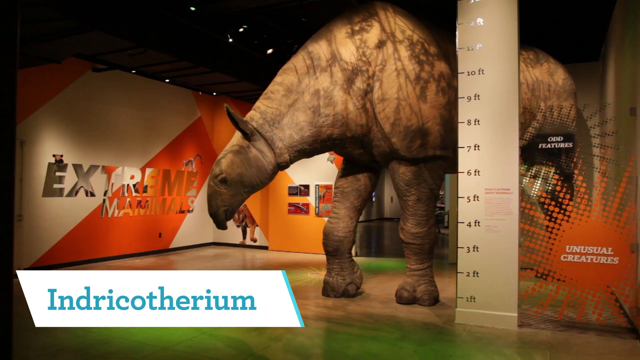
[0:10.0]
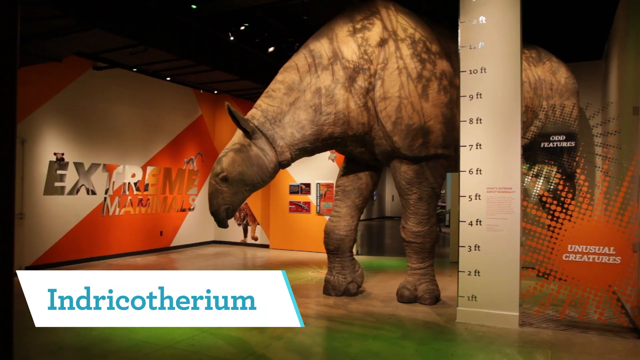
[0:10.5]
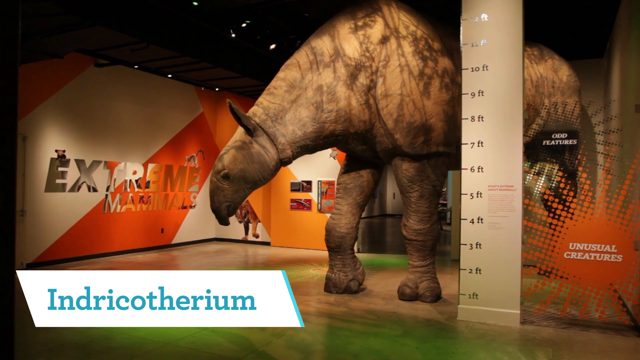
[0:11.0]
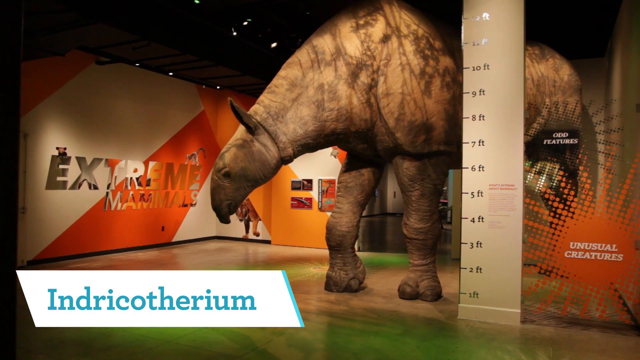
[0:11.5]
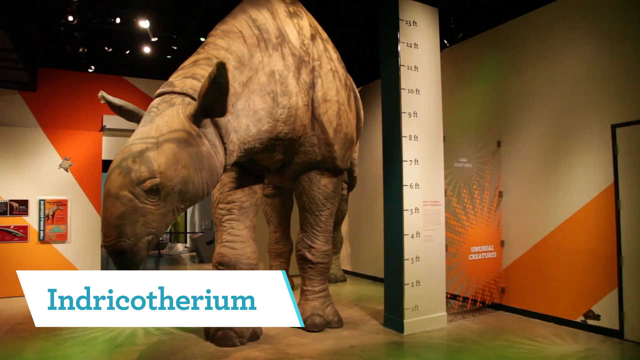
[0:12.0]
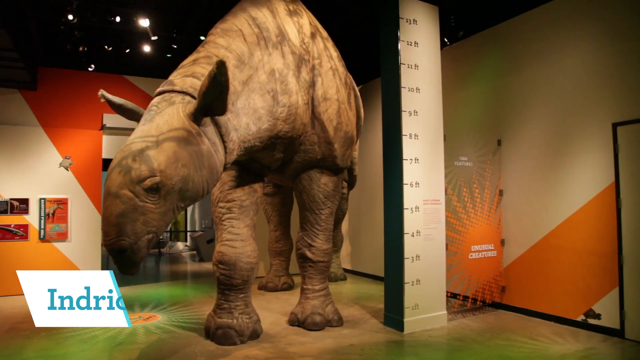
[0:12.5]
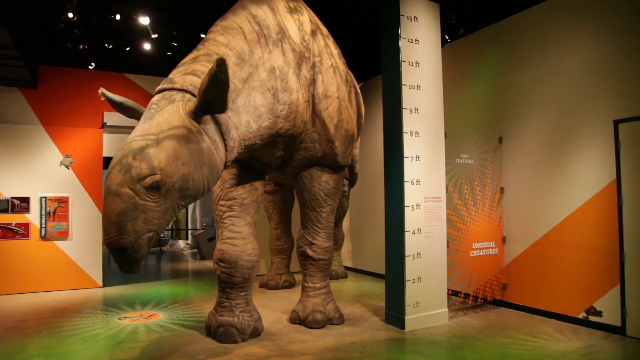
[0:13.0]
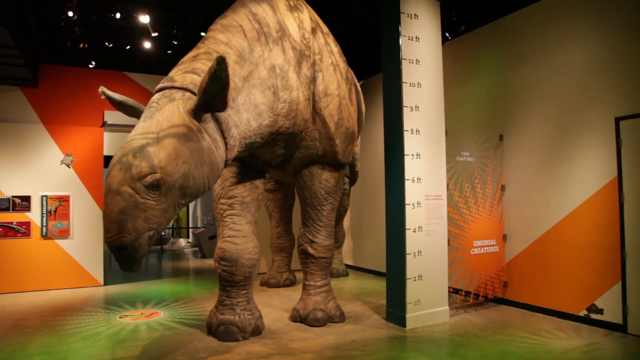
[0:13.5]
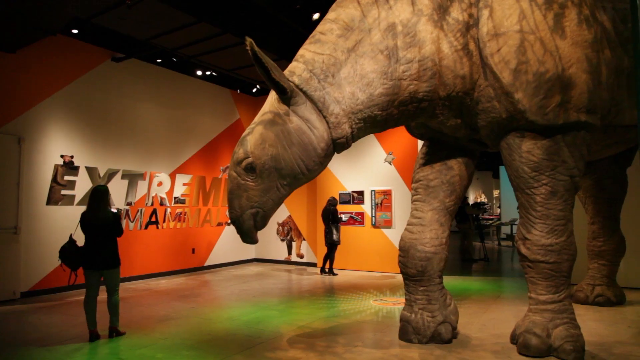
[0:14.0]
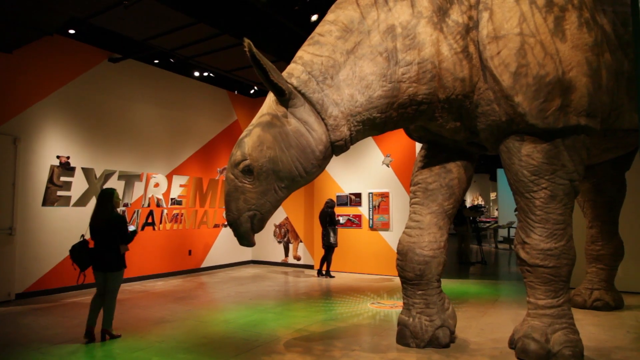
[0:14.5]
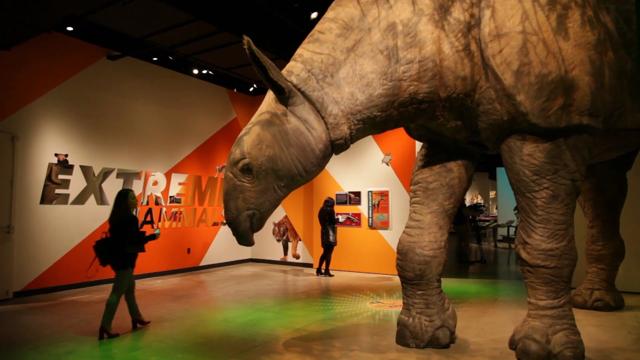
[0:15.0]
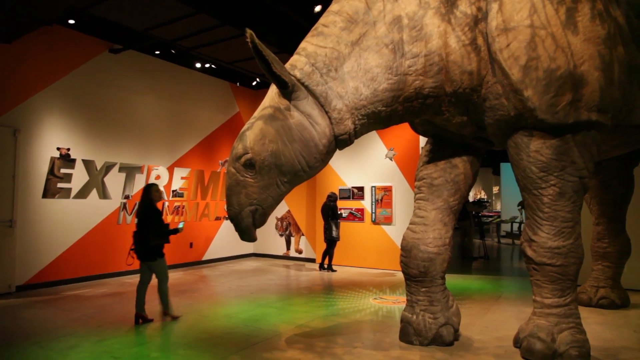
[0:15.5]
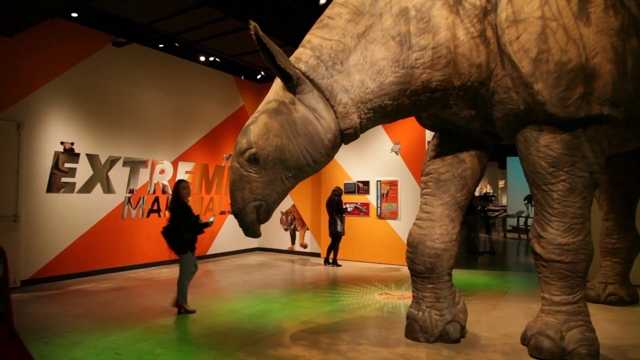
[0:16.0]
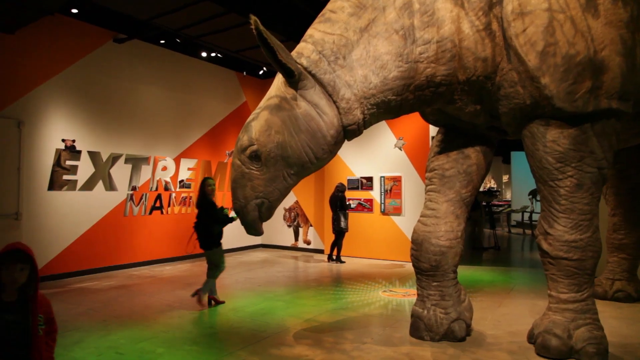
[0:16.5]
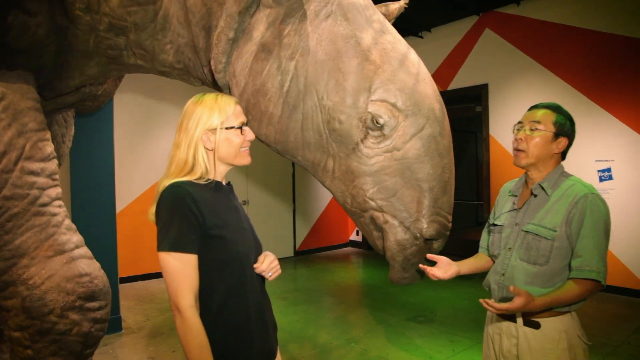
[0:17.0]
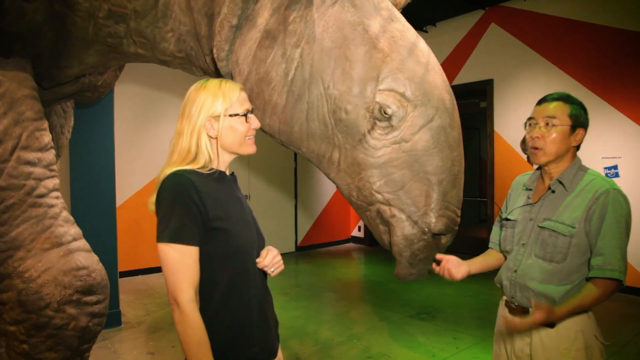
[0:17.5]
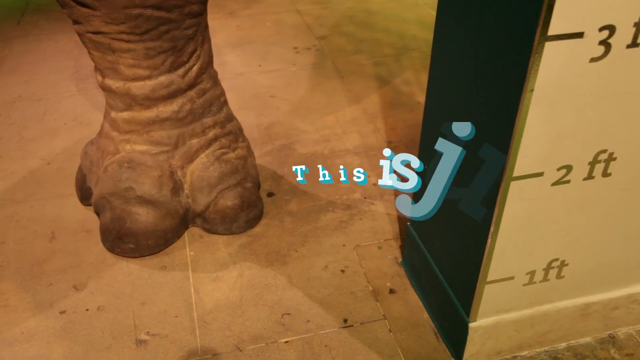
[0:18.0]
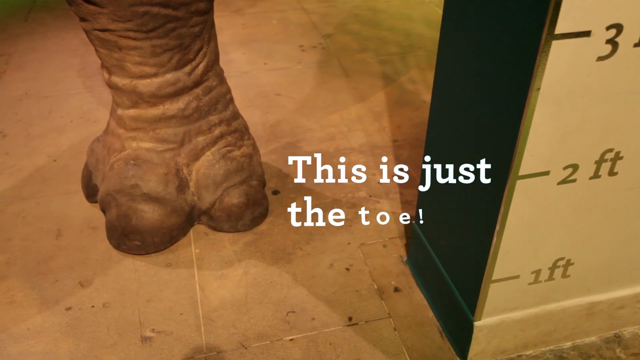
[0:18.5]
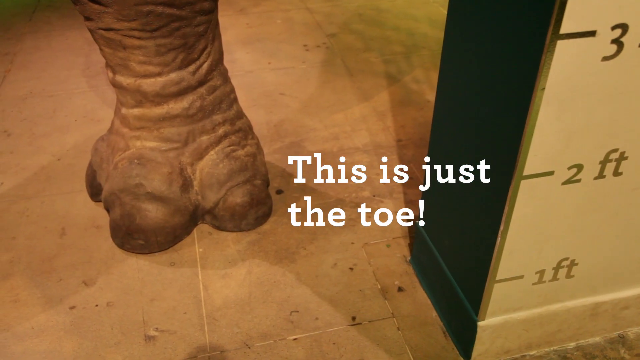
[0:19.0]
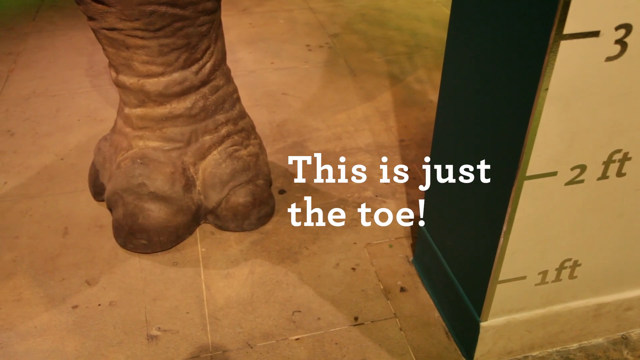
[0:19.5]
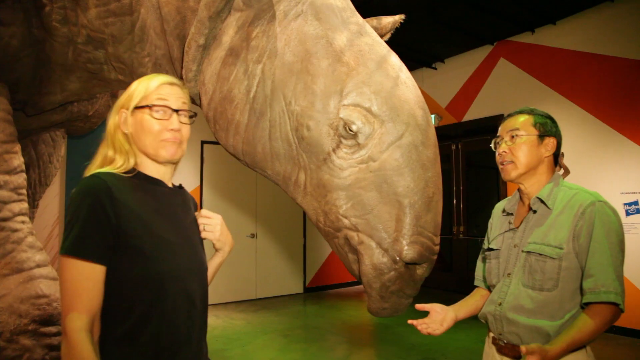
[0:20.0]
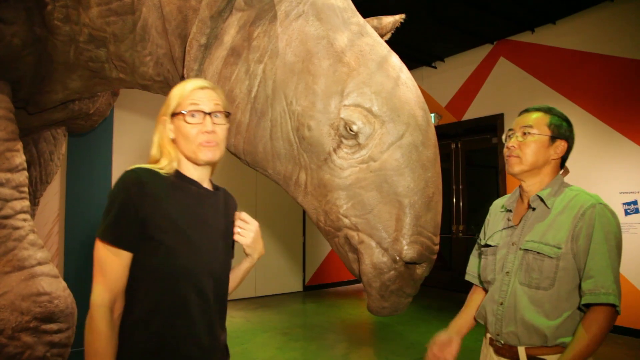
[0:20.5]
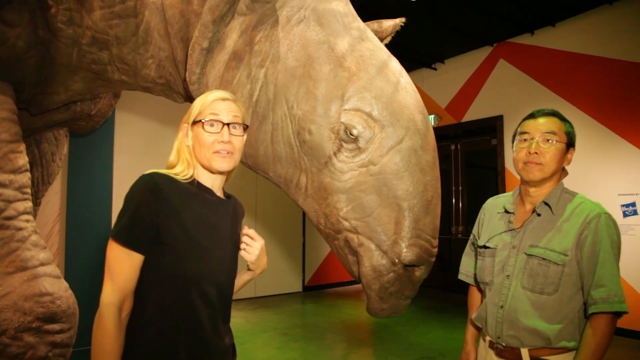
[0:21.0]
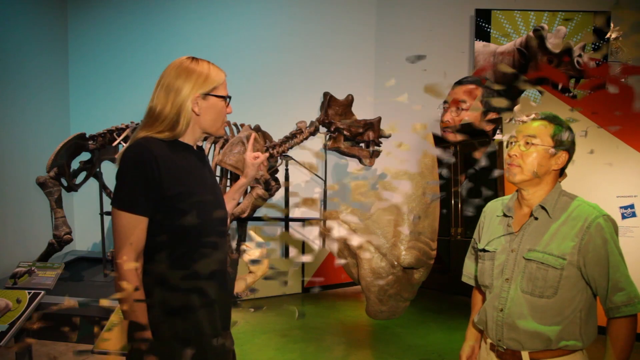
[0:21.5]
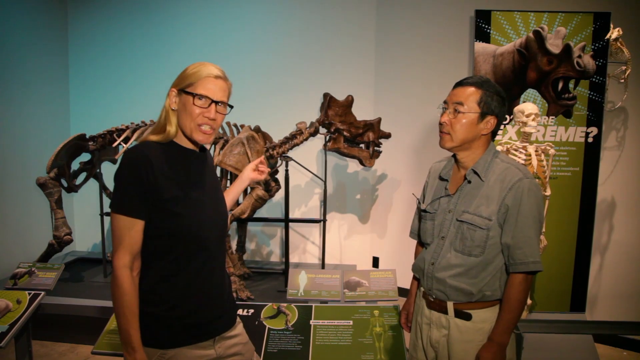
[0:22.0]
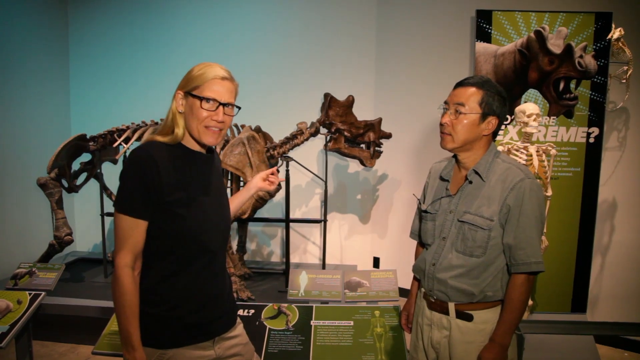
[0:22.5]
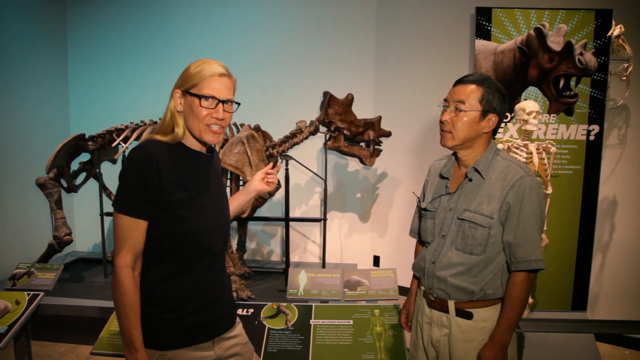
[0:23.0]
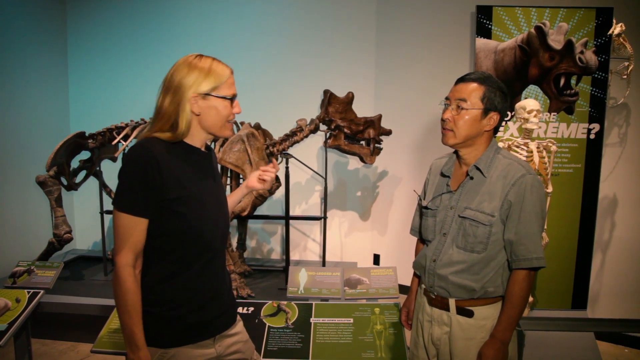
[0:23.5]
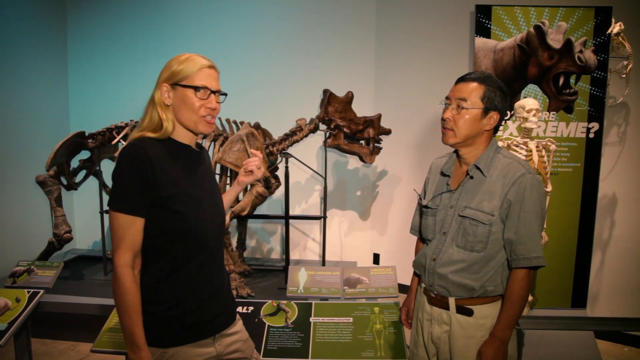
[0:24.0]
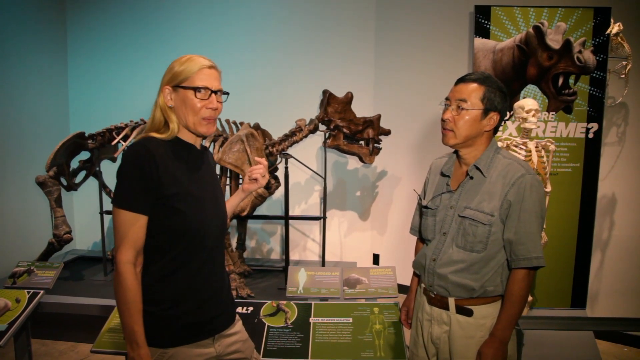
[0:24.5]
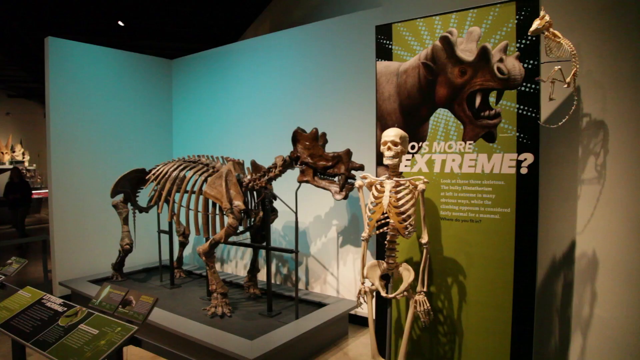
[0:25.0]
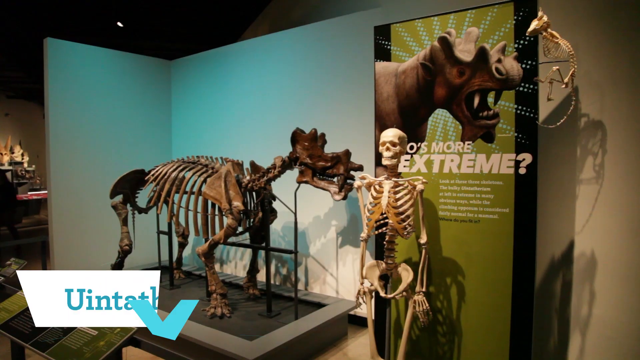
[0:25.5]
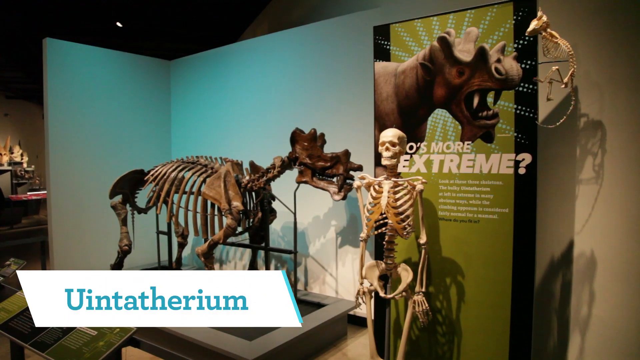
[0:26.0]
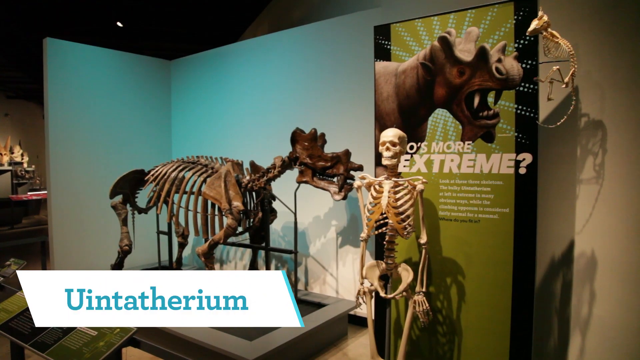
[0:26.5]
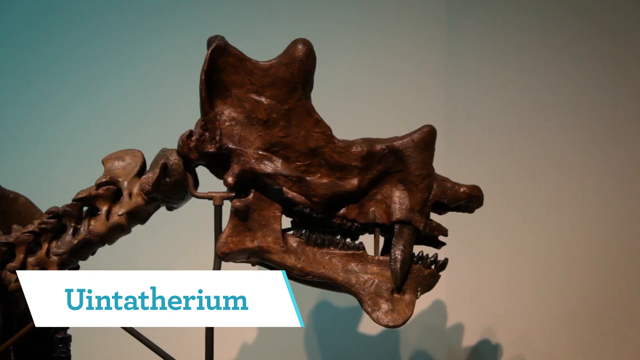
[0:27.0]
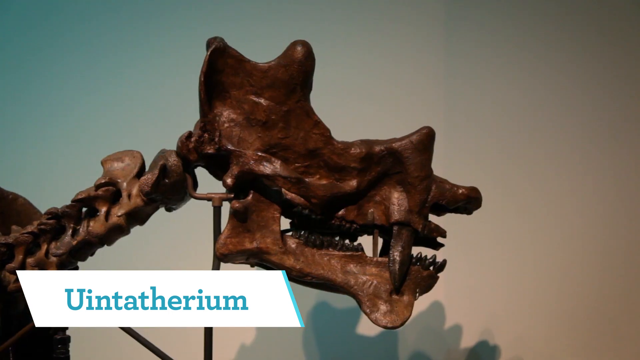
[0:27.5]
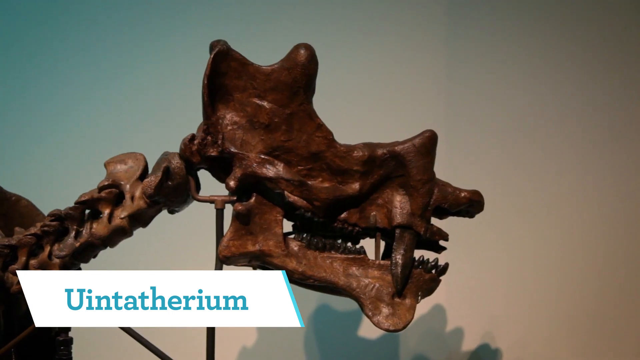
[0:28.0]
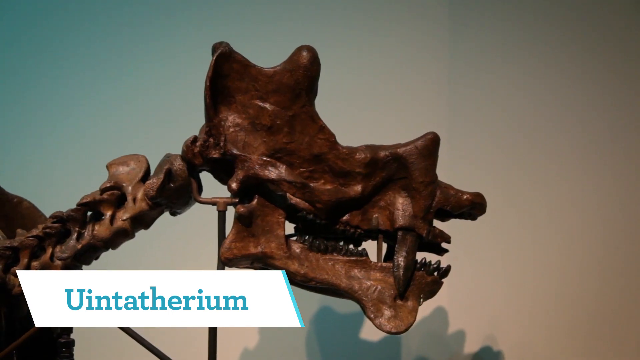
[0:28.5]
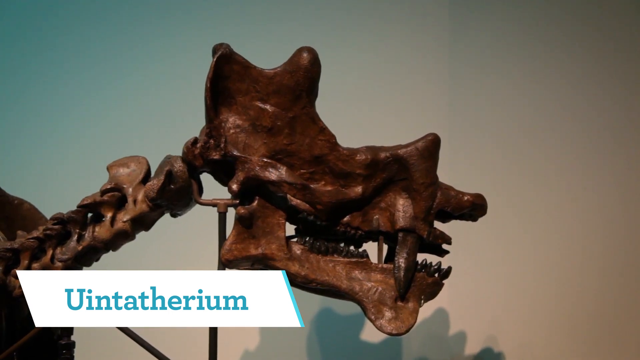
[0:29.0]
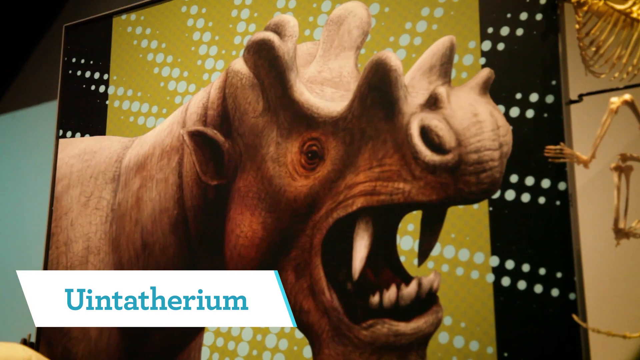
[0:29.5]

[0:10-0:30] A large animal called an Endricoatherium is on display, shown to be about 14 to 15 feet tall at its shoulders. Behind the display, the wall says "extreme mammals" in silver letters, and the wall has red stripes over a white background. To the right, in front of the animal display, "unusual creatures" appears in white text on an orange splotched background, and above that is a little sign with a black background and white text reading "odd features." There appear to be two women behind the display, next to the "extreme mammals" wording on the wall. A Bengal tiger is shown on the wall. One of the two women holds a cell phone in her right hand and maybe a backpack or purse in her left arm or hand. The other woman is reading some kind of book or display in her hands, standing near the wall.